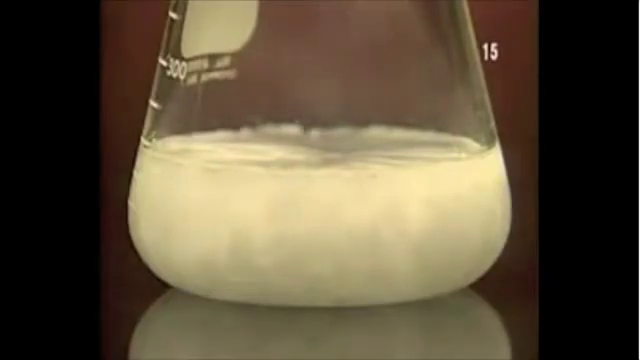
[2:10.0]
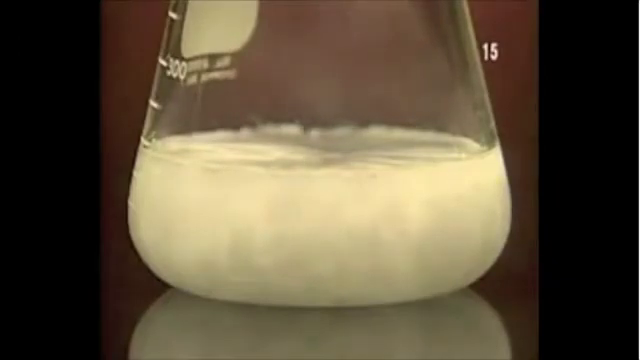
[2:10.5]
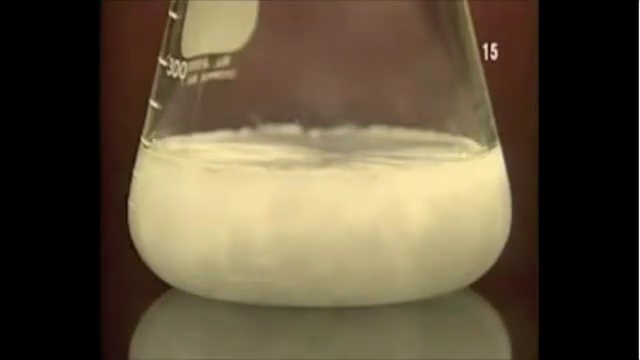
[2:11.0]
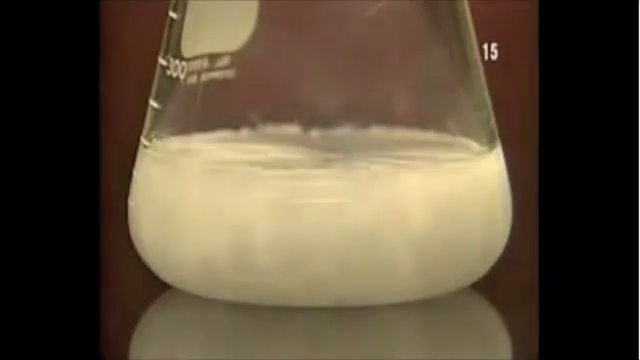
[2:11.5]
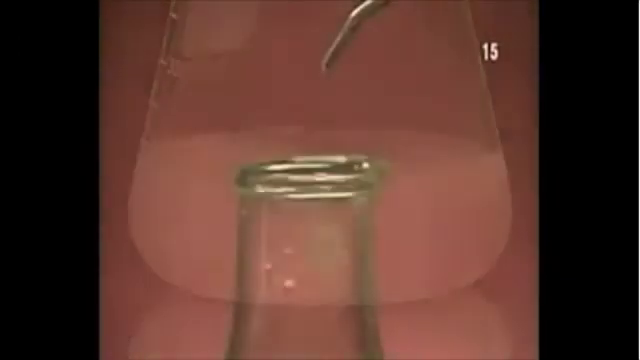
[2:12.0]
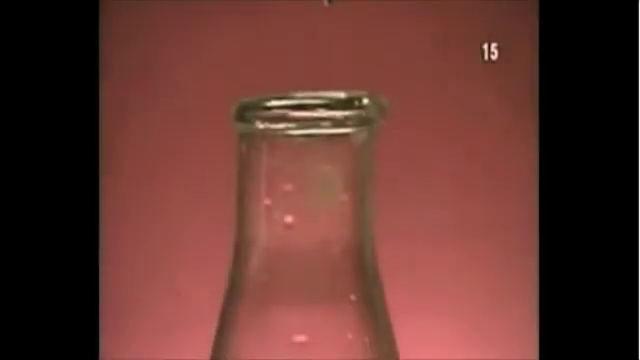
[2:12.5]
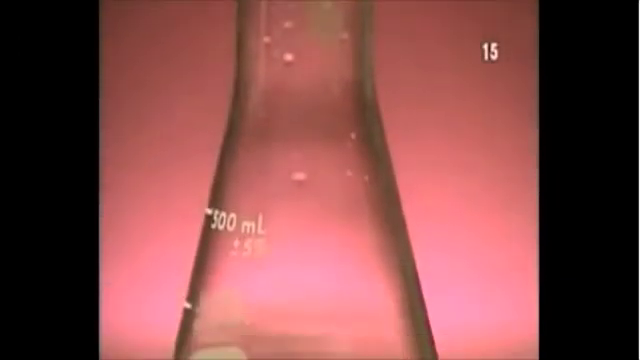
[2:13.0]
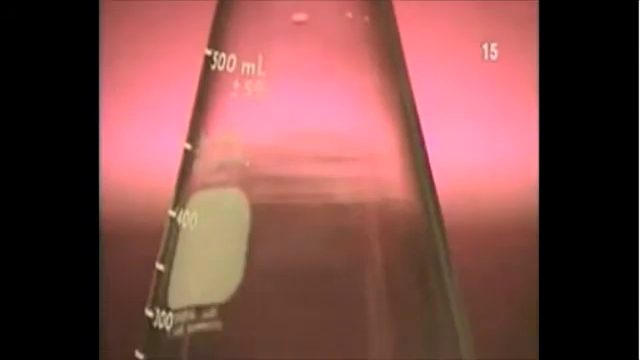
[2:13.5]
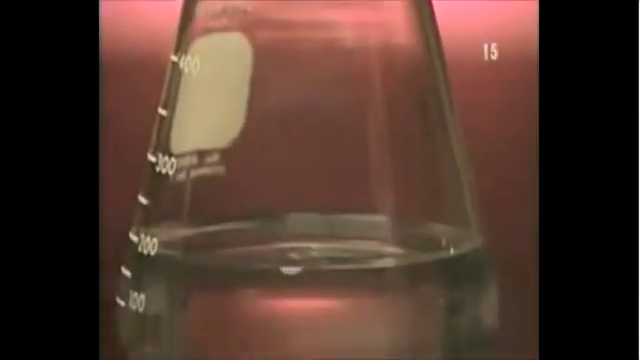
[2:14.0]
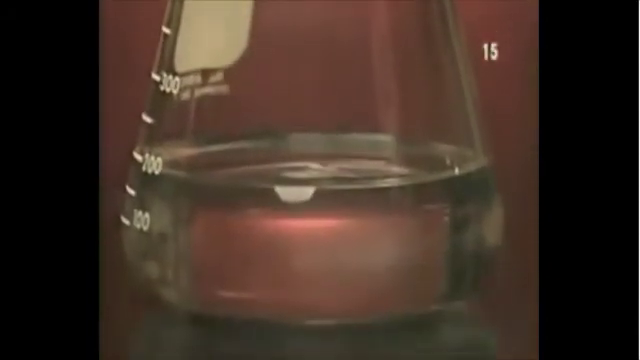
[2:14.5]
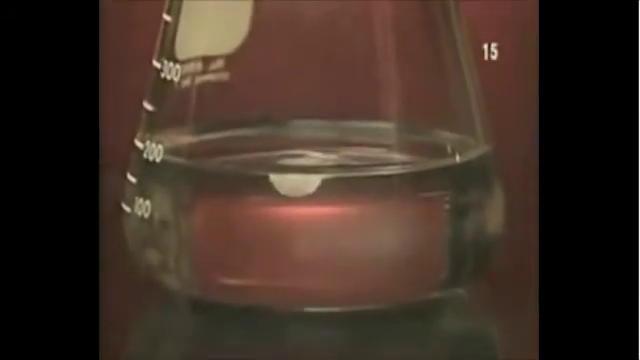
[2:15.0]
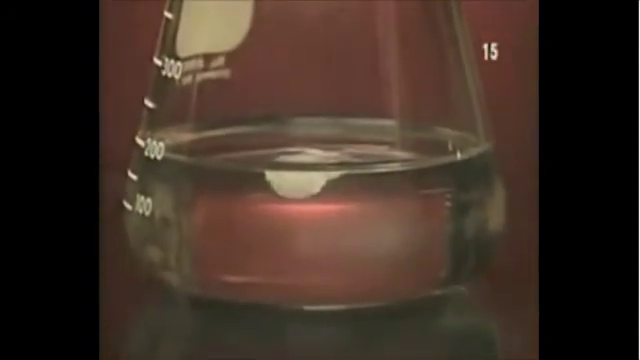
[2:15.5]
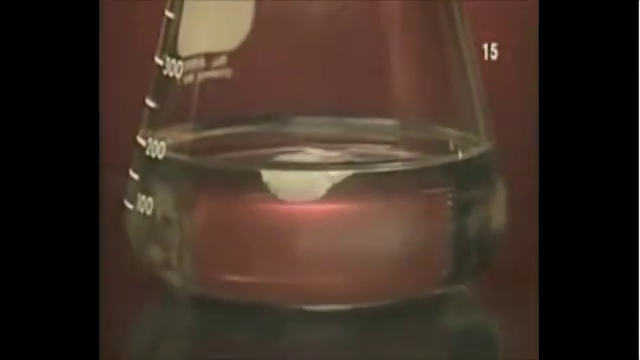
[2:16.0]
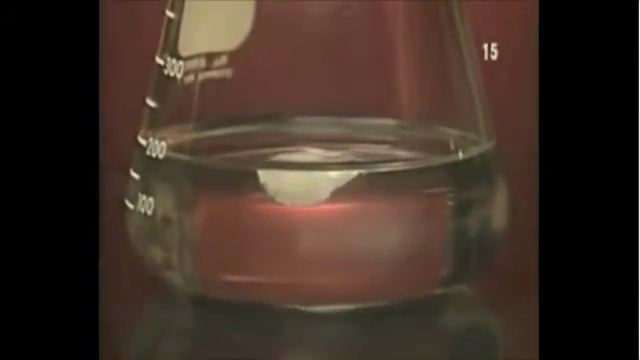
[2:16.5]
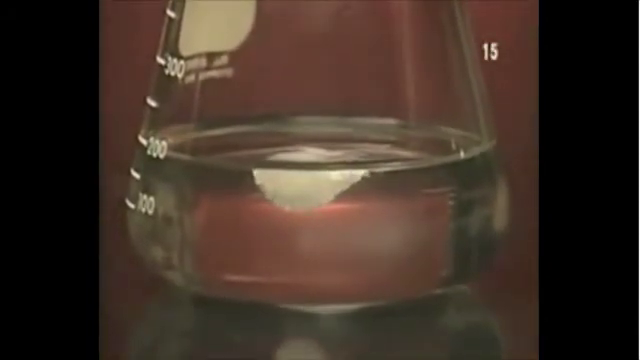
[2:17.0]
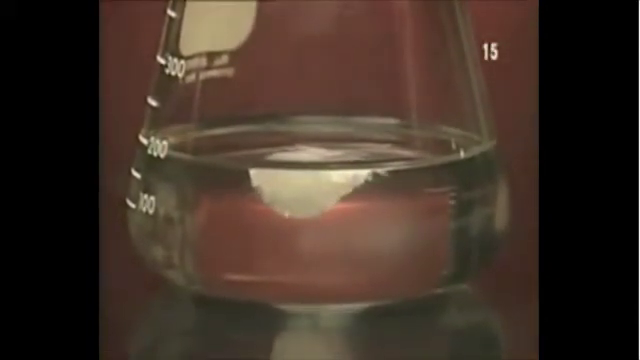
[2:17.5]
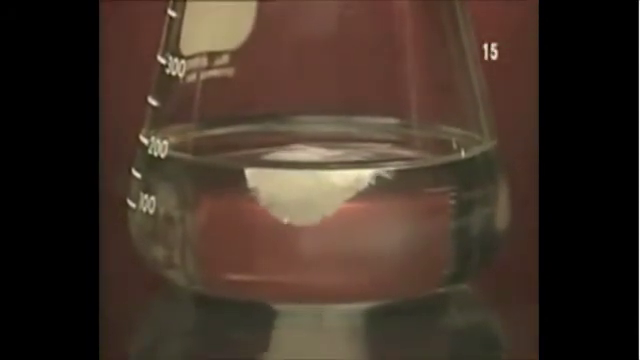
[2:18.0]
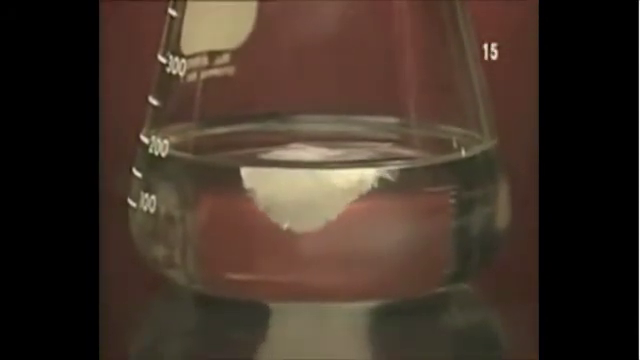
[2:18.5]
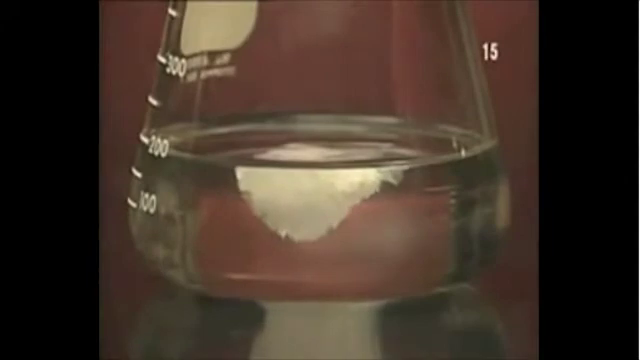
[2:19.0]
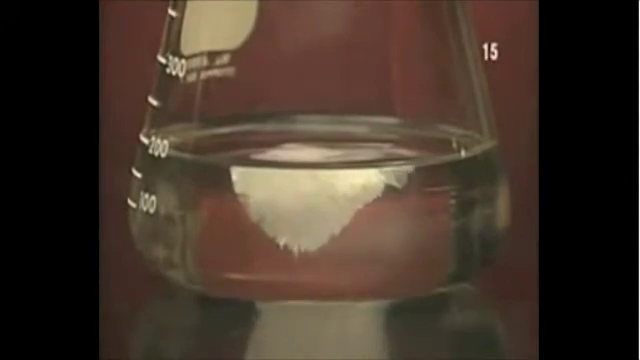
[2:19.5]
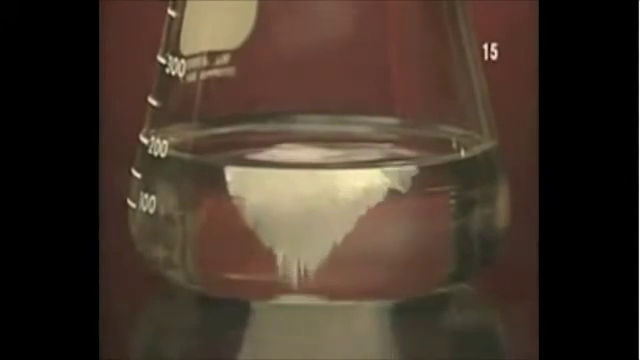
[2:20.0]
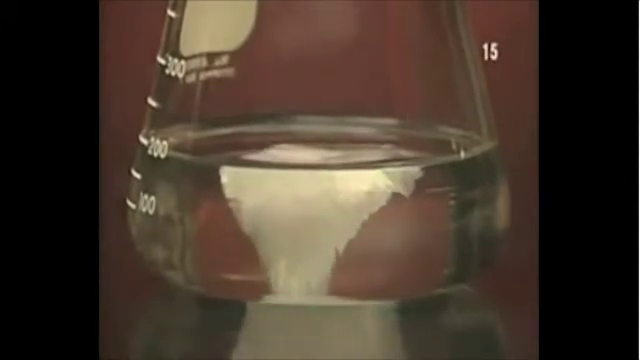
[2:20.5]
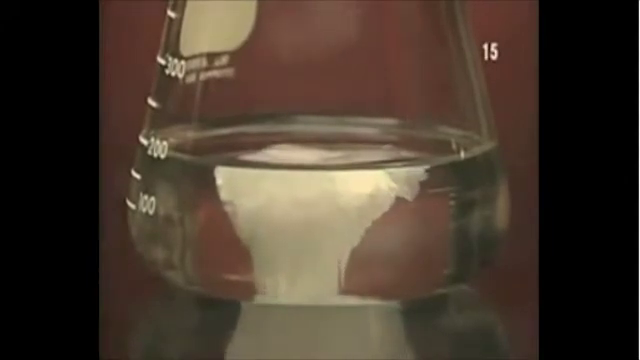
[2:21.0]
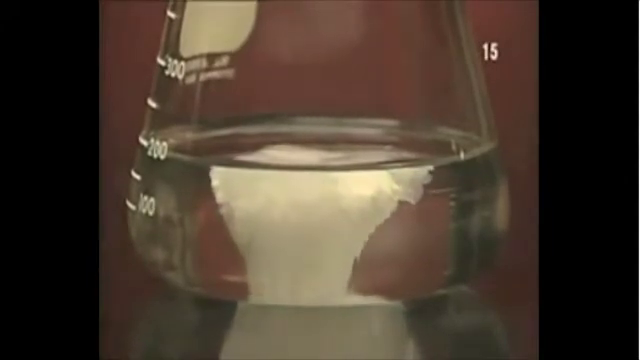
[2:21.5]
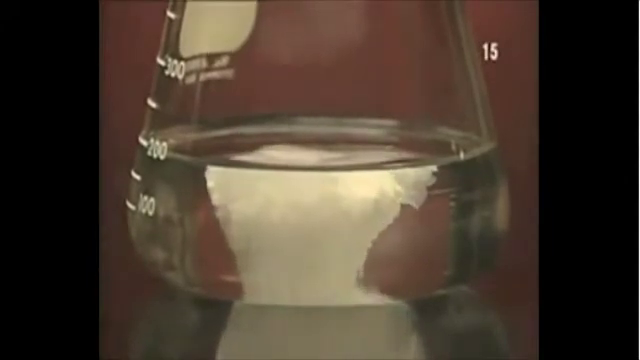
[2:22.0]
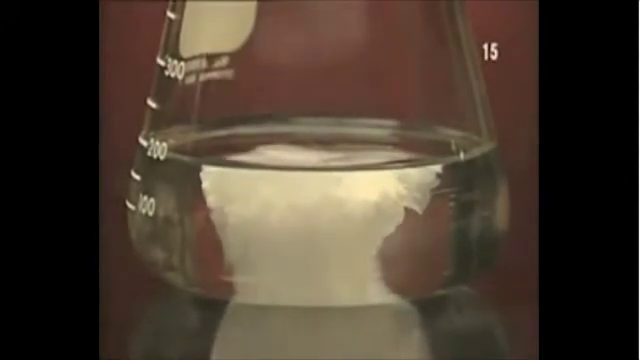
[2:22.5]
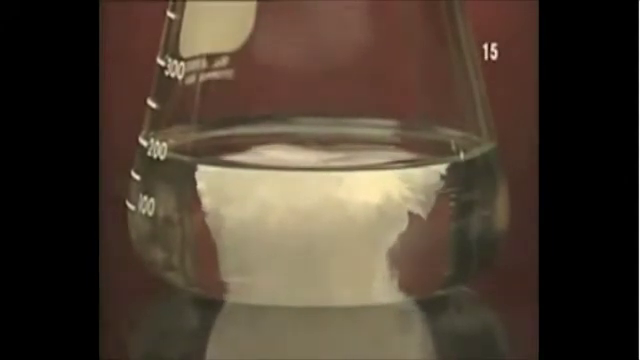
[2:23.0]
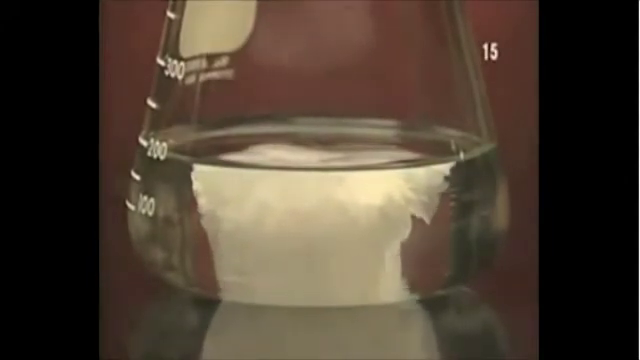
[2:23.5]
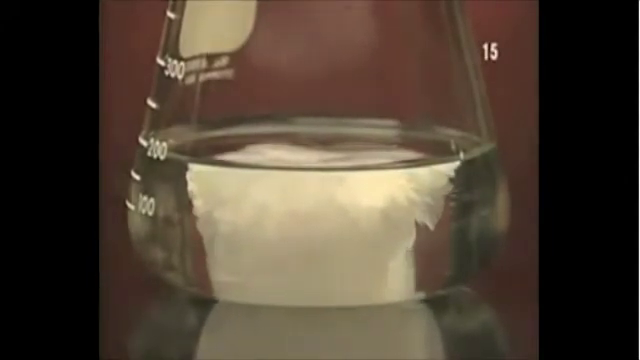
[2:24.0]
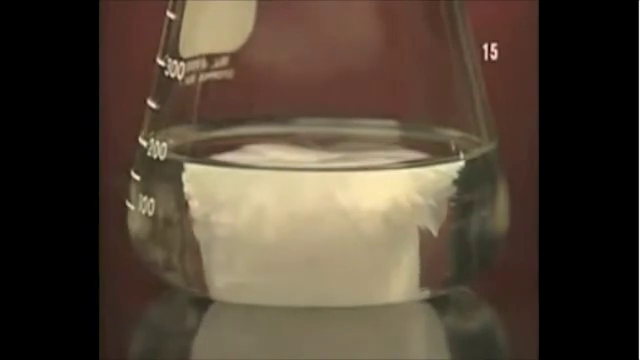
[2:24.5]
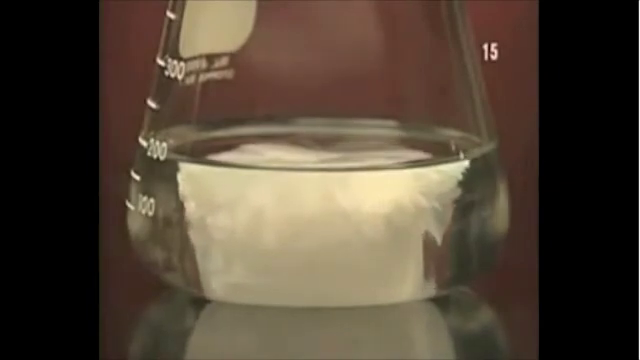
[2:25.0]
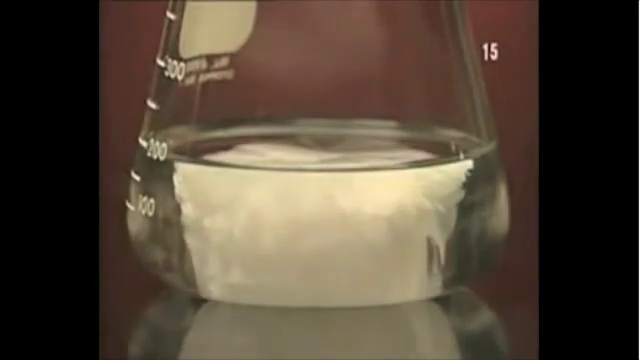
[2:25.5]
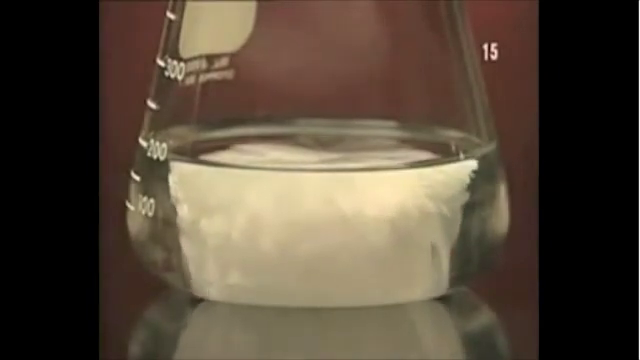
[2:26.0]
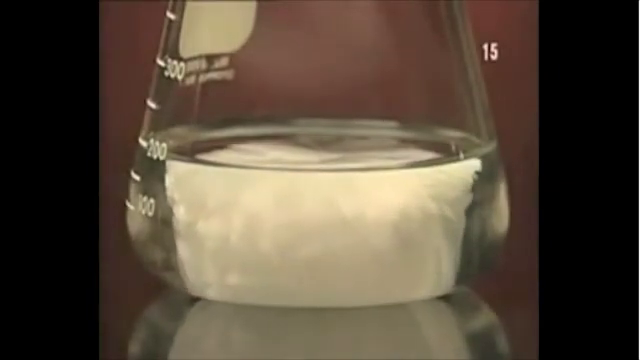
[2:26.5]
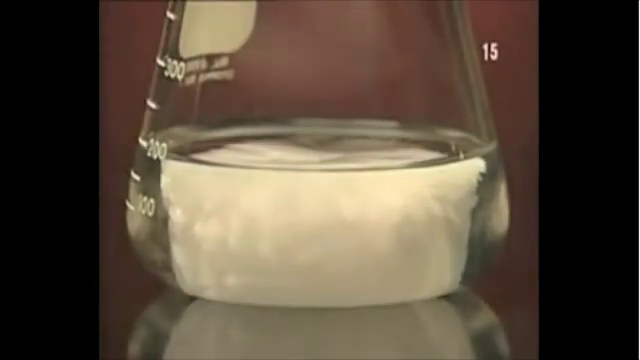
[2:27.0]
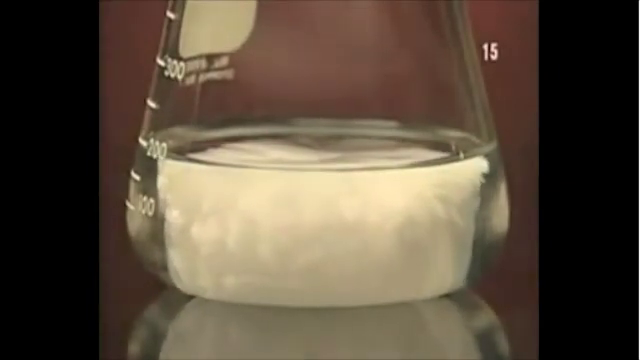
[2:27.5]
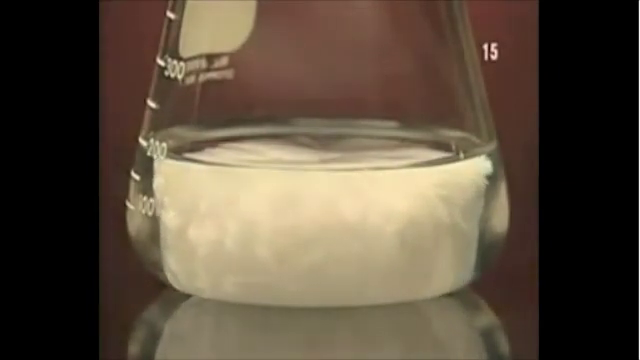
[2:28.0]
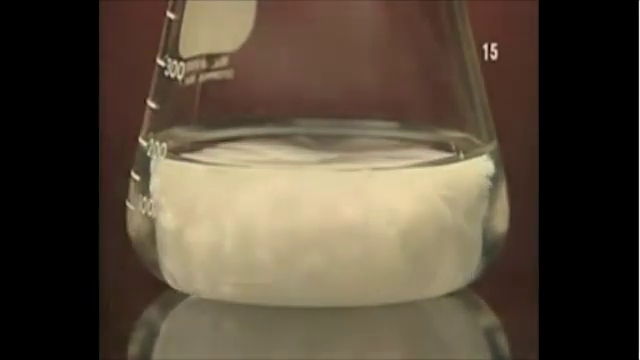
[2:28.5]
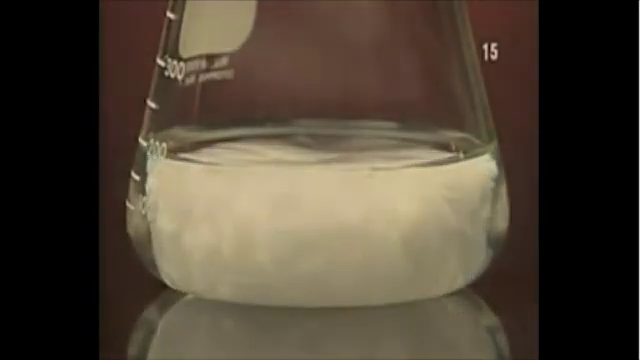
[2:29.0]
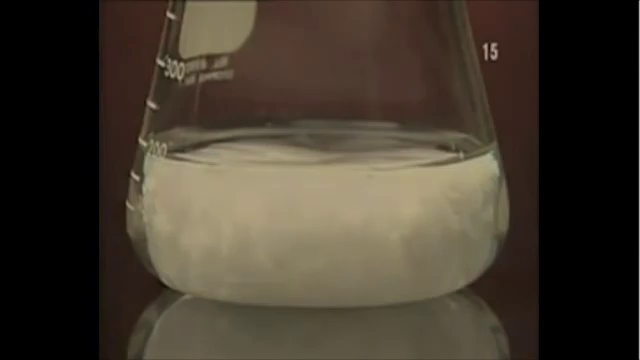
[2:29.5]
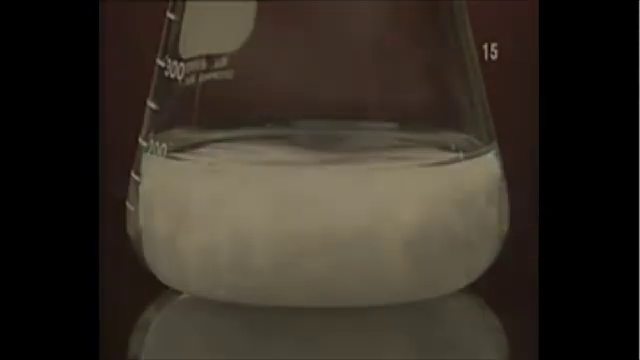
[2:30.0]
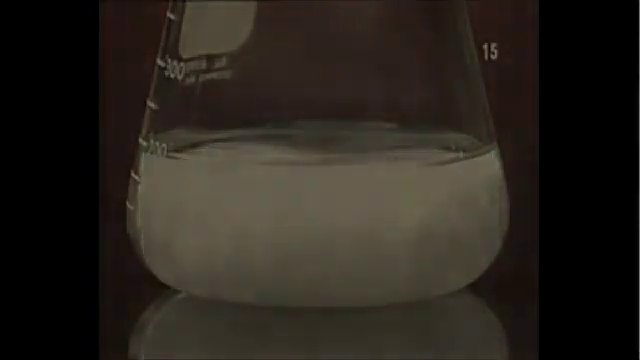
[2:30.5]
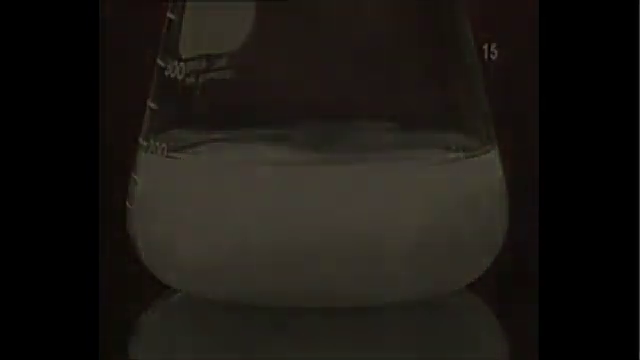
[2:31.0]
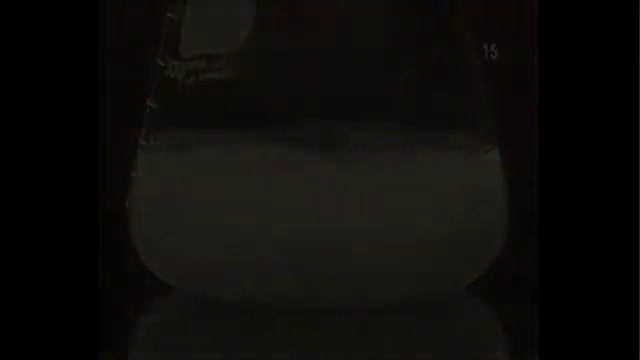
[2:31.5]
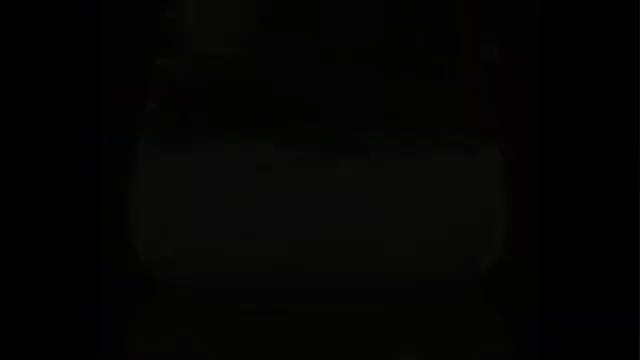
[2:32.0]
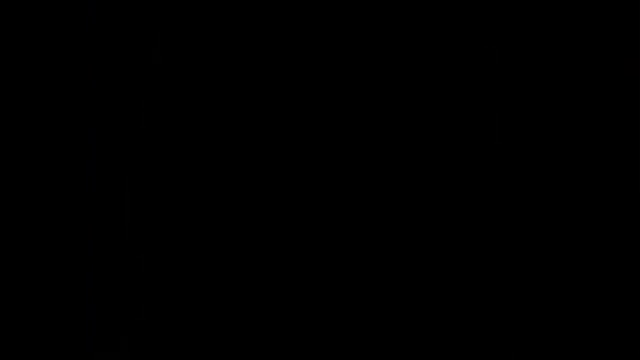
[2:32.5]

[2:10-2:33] A beaker holds white liquid in its bottom, formed from a crystal of salt placed in the water. A measurement of around 200 is on the beaker. In close-up, the crystals dissolve, first expanding and then taking up the entire water, leaving white water in the bottom of the beaker.